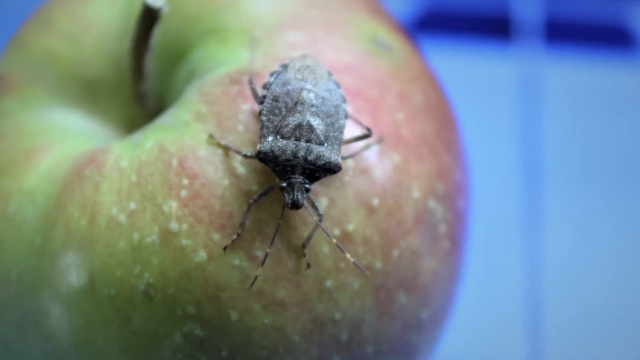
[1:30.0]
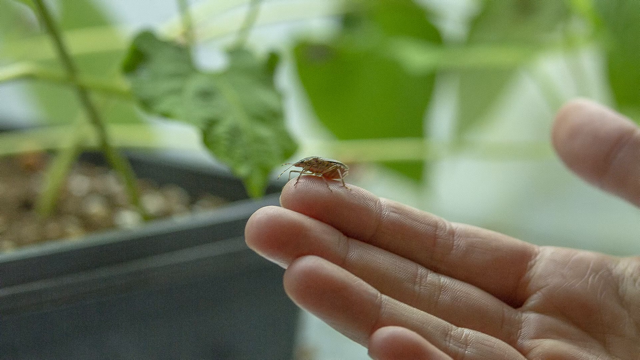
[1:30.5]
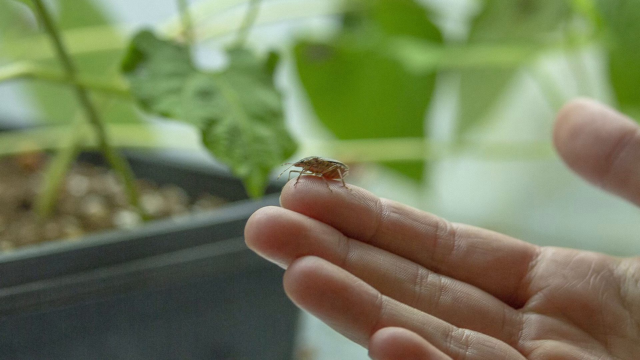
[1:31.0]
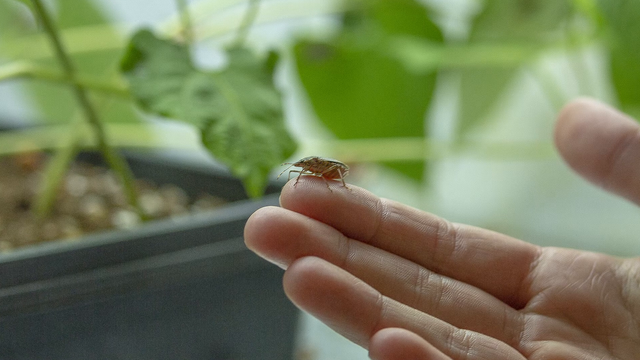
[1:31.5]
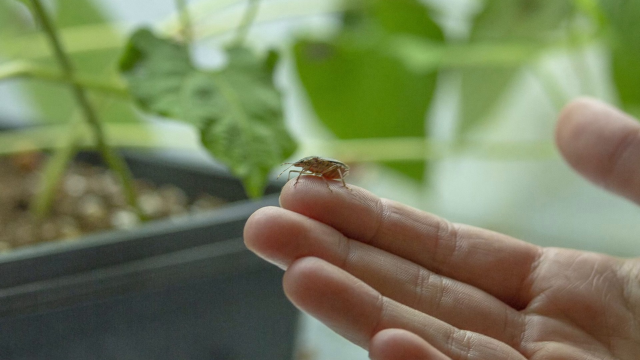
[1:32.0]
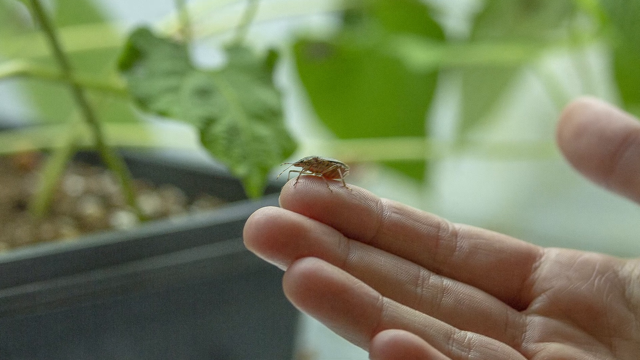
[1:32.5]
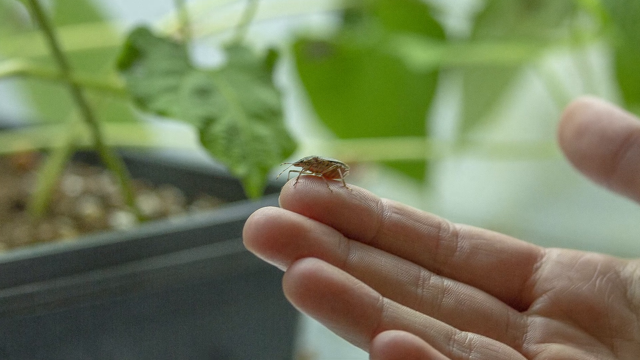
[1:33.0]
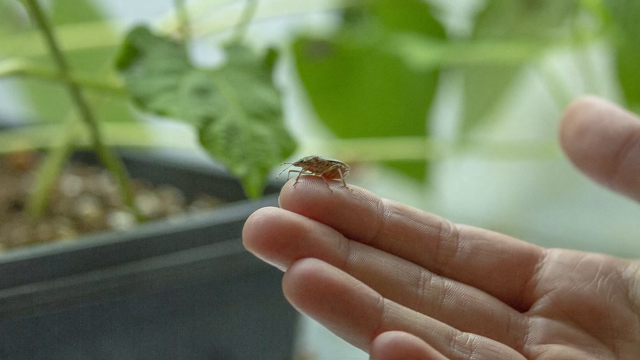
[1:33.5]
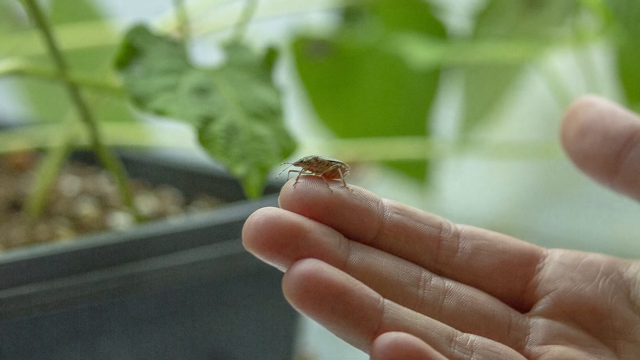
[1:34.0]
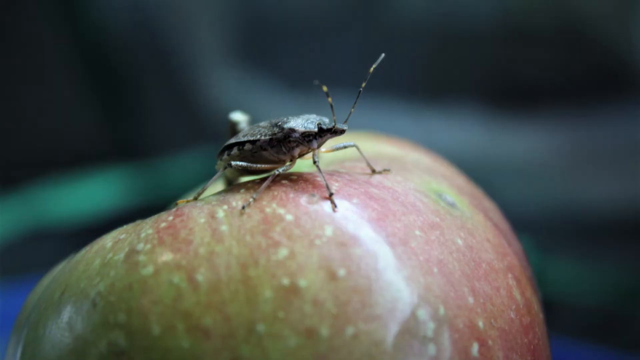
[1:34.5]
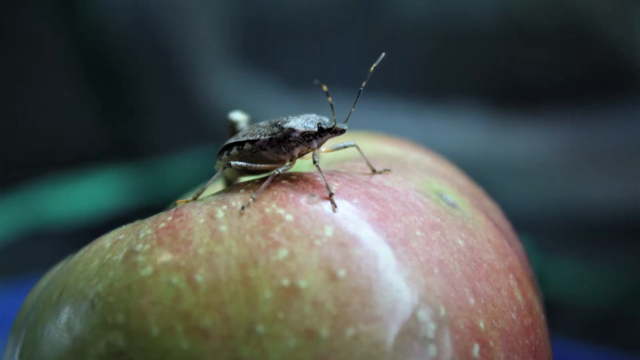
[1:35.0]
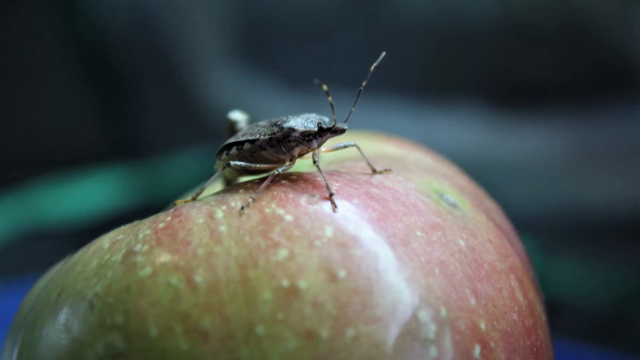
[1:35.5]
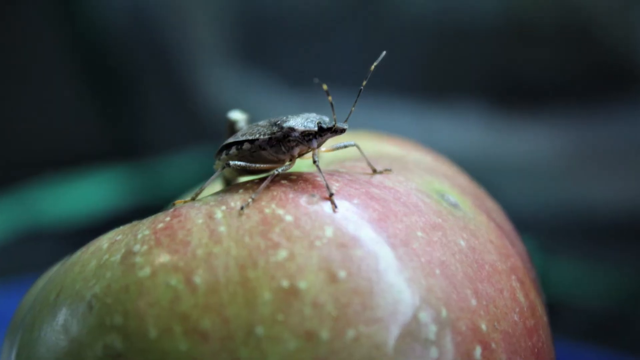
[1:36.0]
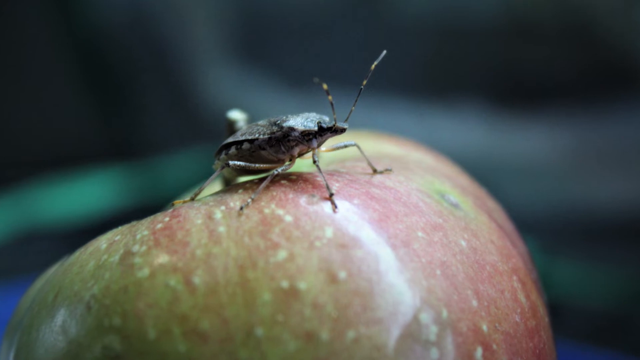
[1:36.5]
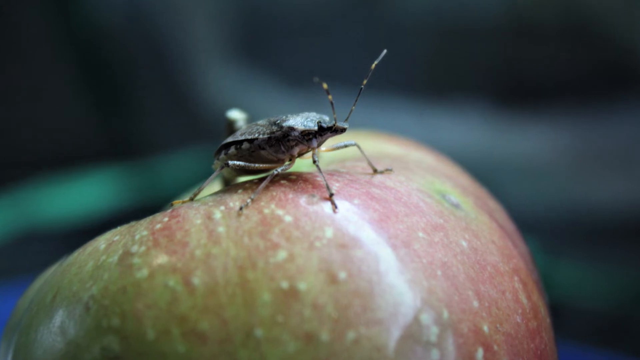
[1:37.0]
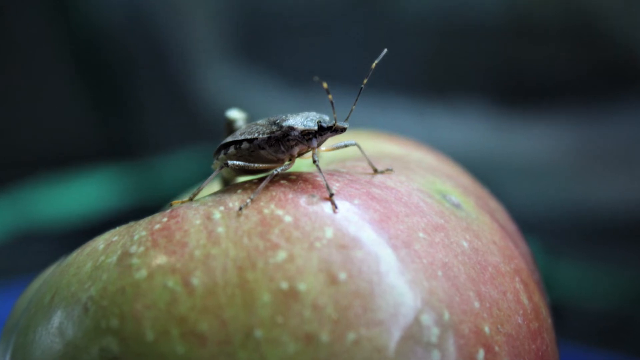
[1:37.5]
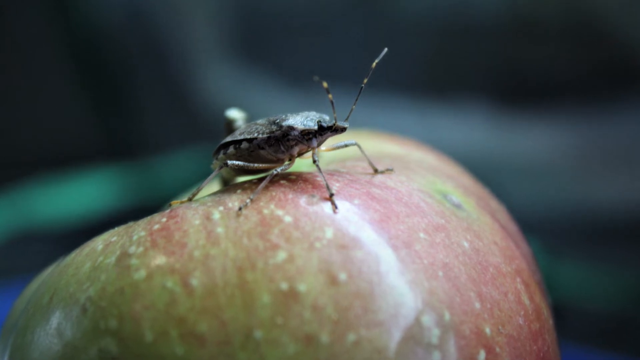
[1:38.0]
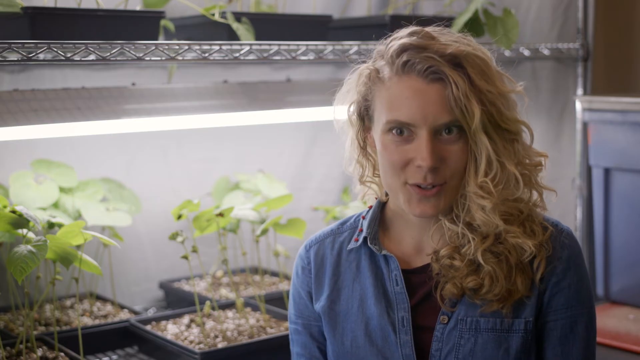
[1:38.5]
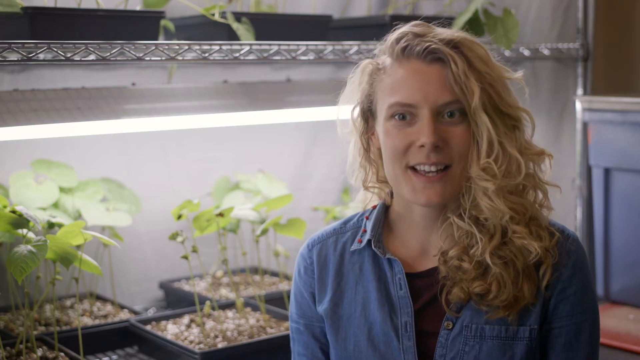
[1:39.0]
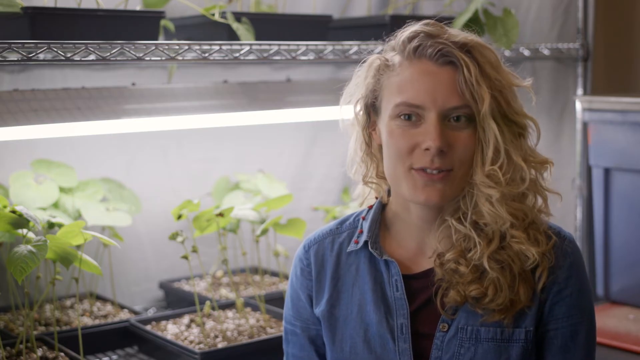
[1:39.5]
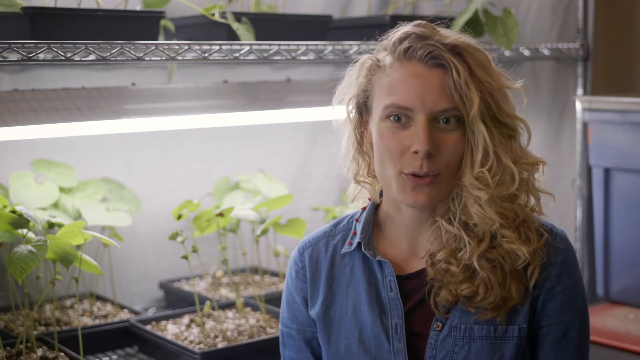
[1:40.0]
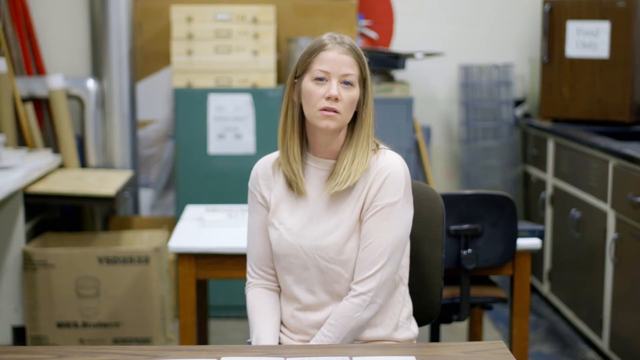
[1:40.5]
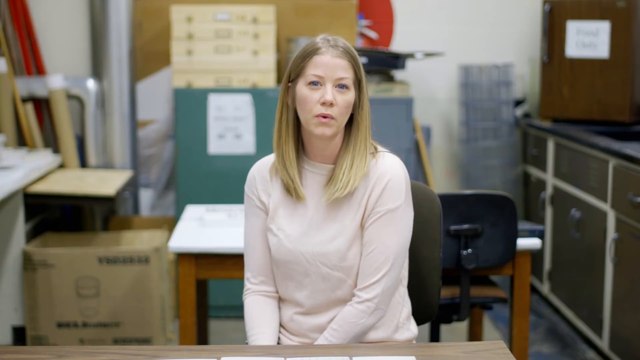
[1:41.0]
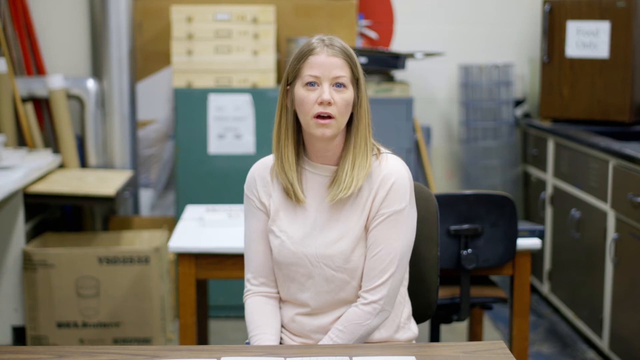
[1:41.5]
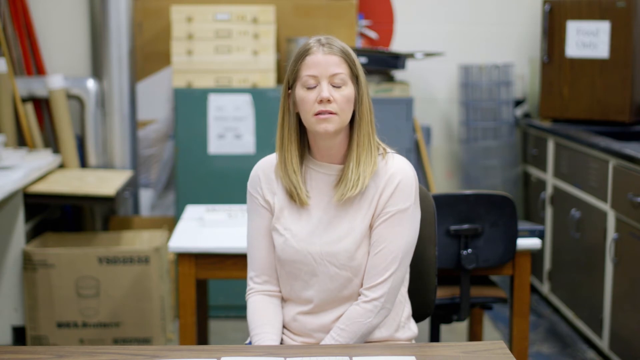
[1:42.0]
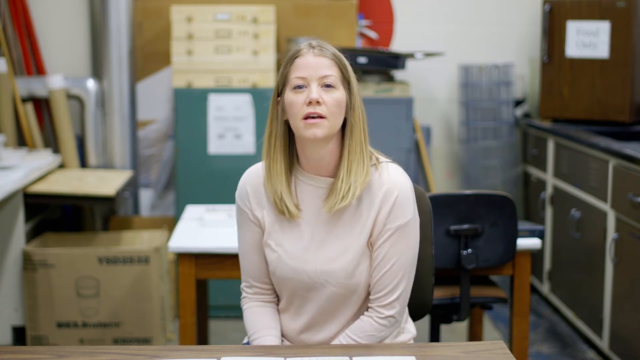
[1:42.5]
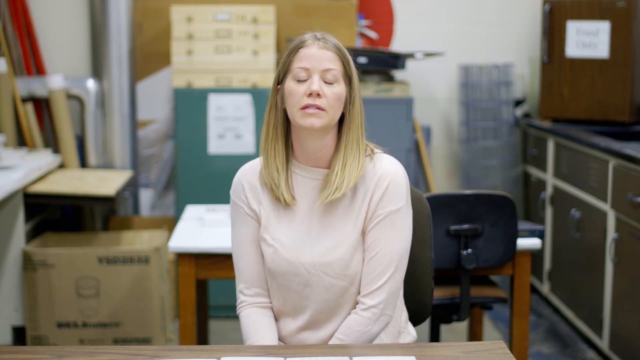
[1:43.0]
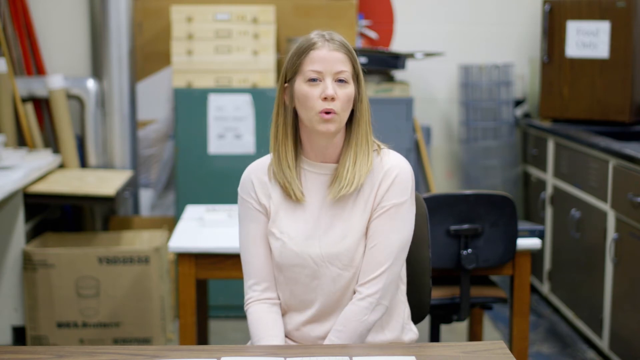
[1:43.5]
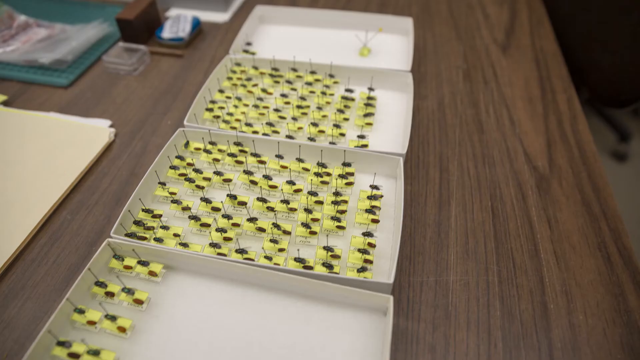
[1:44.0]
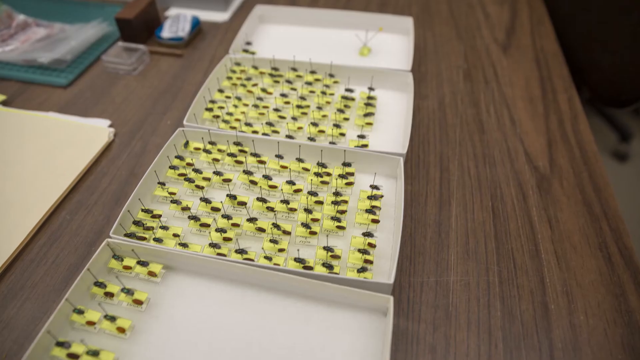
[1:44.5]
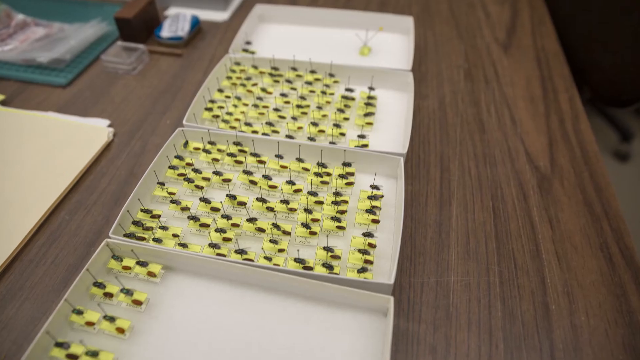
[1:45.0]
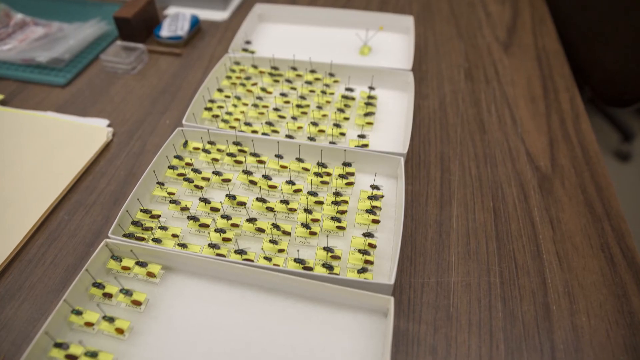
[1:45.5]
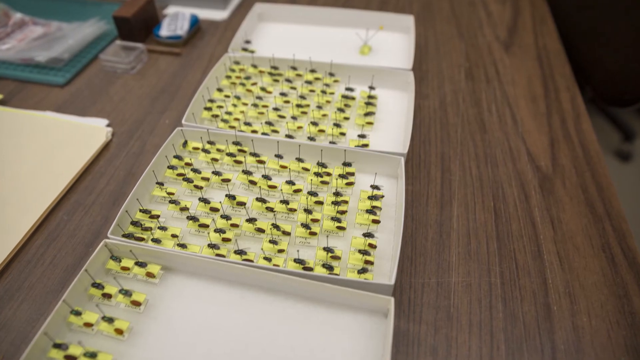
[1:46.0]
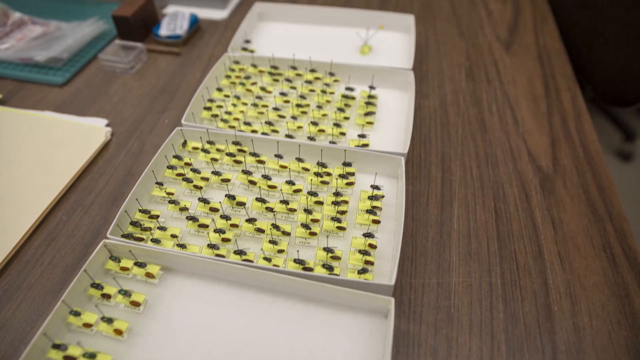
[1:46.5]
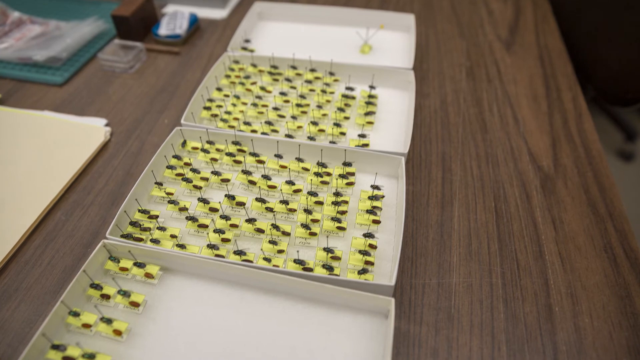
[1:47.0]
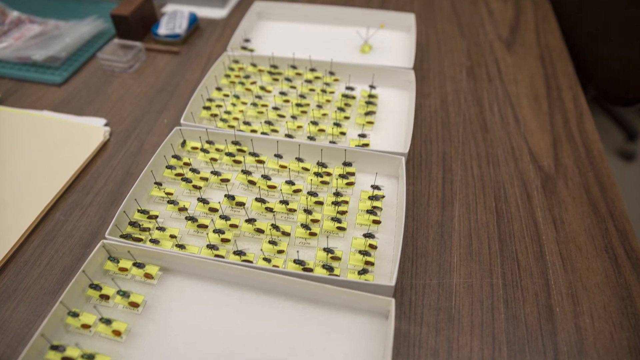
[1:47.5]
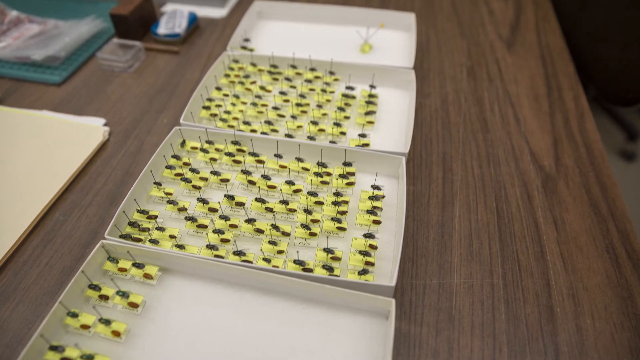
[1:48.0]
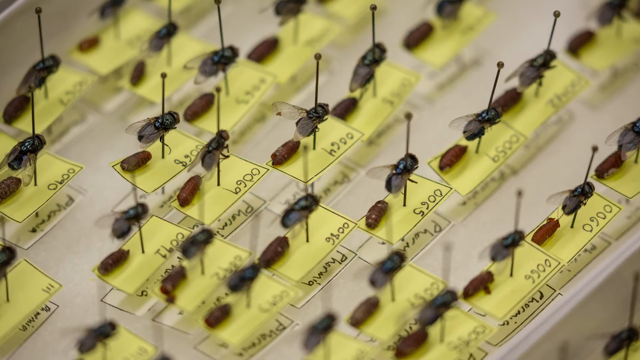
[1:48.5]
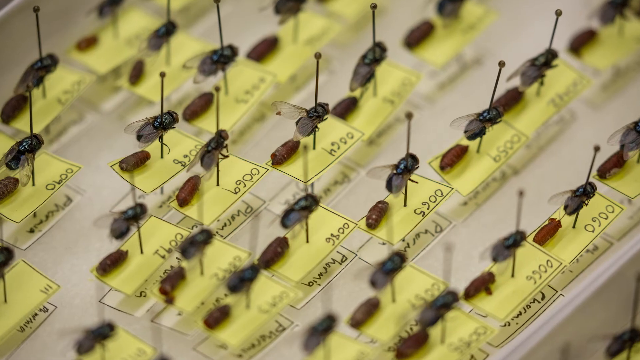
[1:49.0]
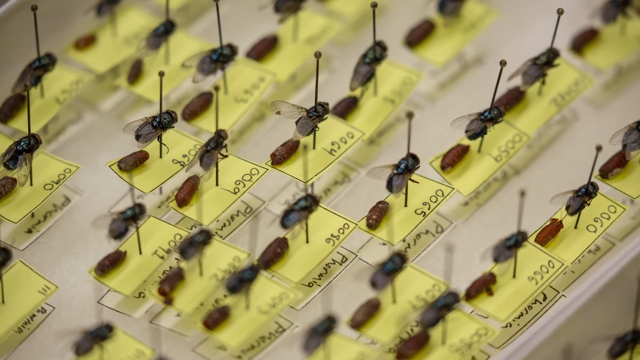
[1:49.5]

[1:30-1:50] What looks to be either a beetle or a stink bug sits on top of a green and red apple. A person's hand then has one of these bugs on it, with leaves and plants slightly blurred out in the background. Another photo shows one of these stink bugs on top of an apple with a blurry background. A woman with wavy, blonde, shoulder-length hair wearing a blue denim jacket looks at the camera and talks, with plants behind her, a light above the plants, and a blue storage container on the right. The video transitions to another woman with blue eyes and long, pin-straight, blonde hair wearing a white, cream-colored, long-sleeved shirt, in a very disorganized and cluttered room. A photograph then shows what looks to be a bunch of different bugs in boxes on a brown table, surrounded by other objects. Up close, there appears to be a fly and a number.